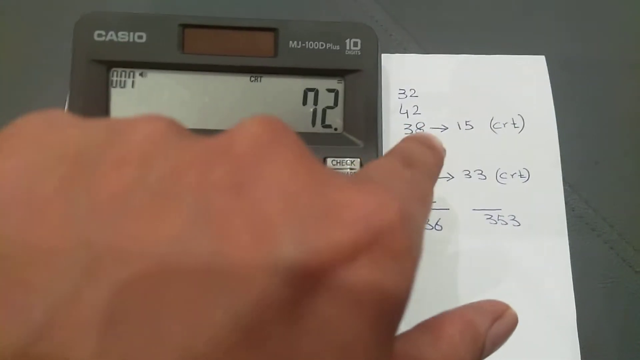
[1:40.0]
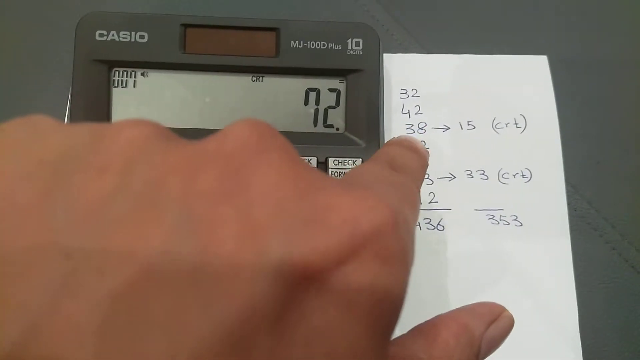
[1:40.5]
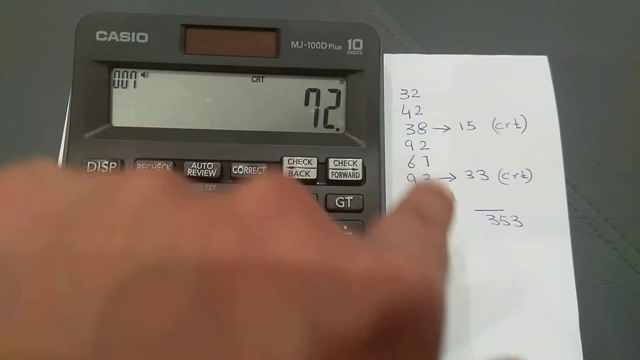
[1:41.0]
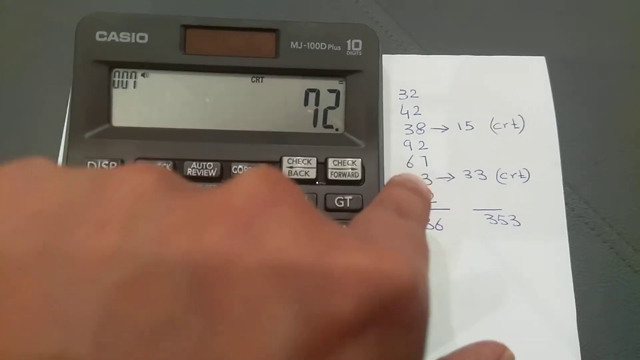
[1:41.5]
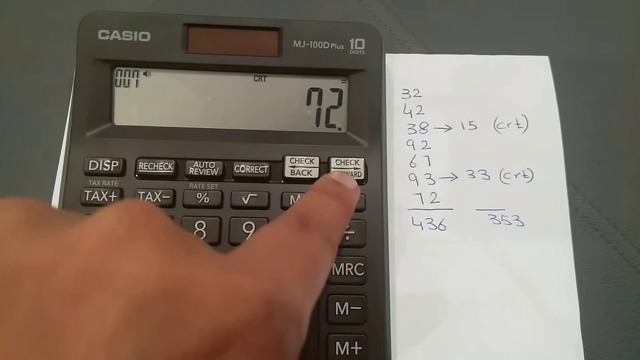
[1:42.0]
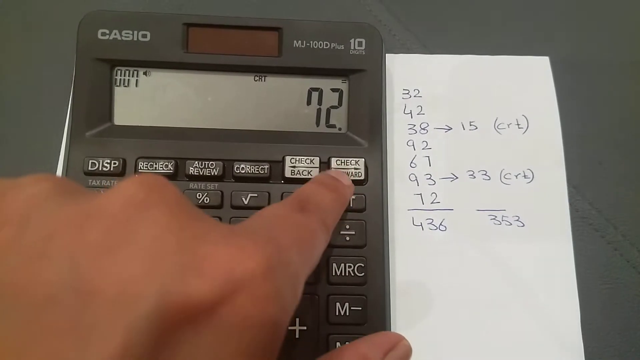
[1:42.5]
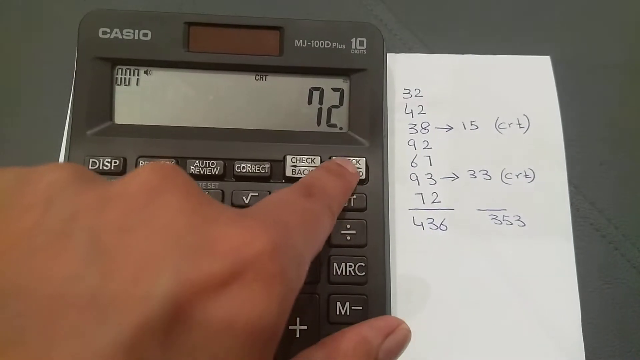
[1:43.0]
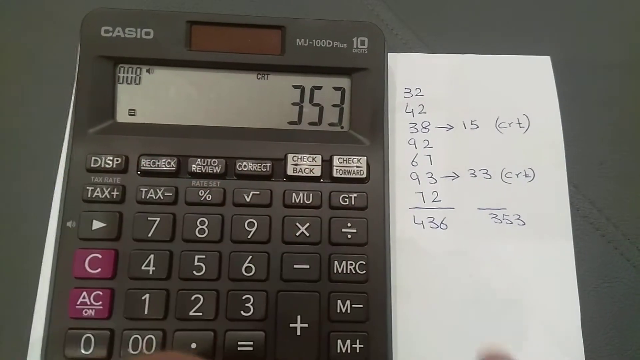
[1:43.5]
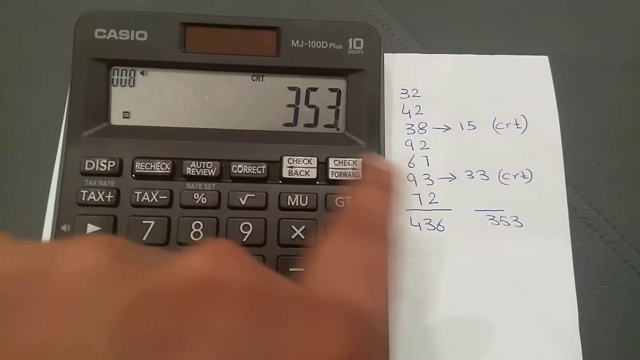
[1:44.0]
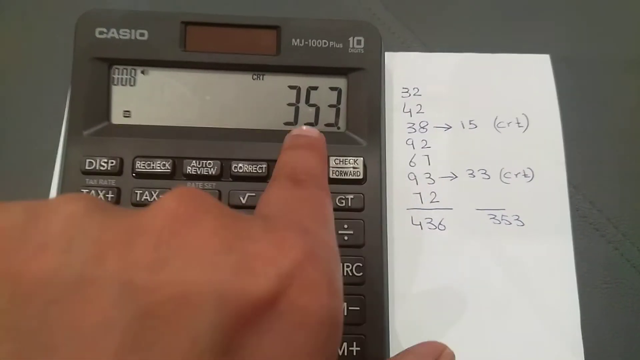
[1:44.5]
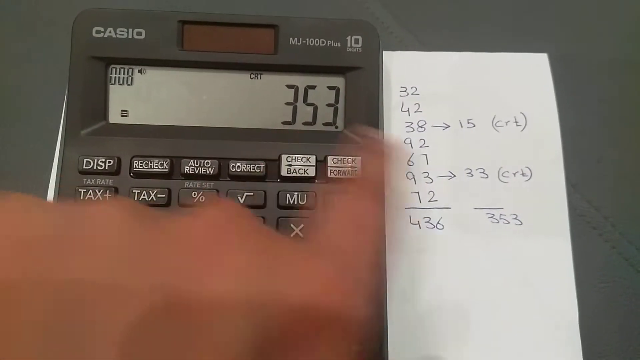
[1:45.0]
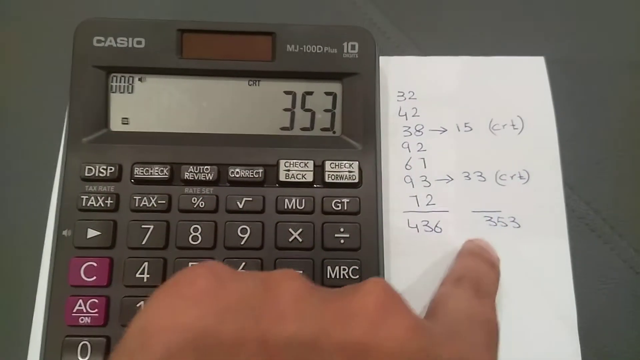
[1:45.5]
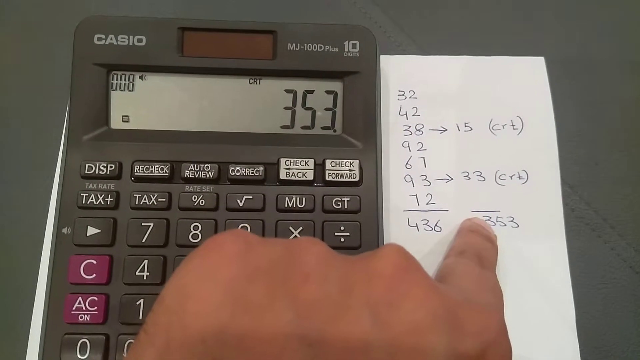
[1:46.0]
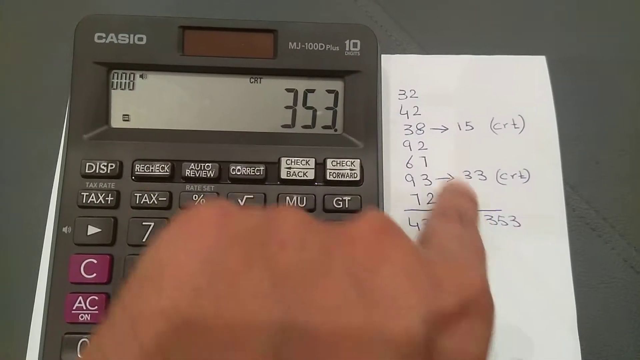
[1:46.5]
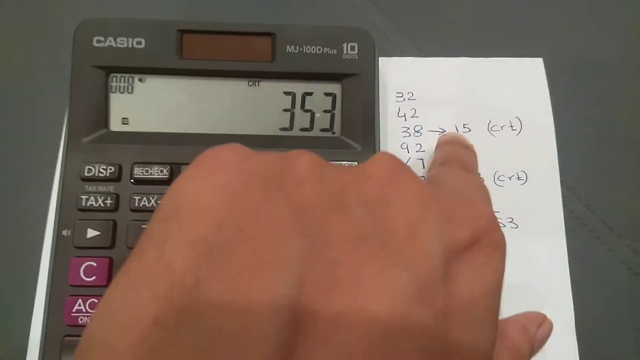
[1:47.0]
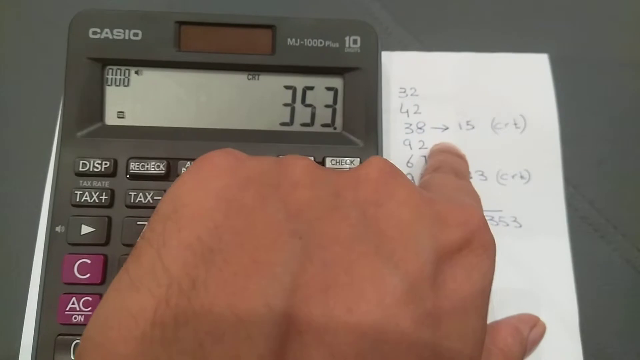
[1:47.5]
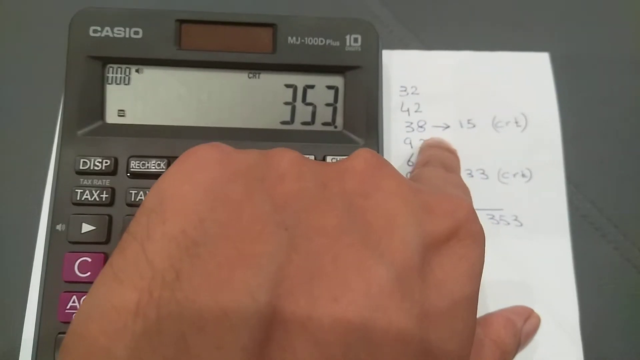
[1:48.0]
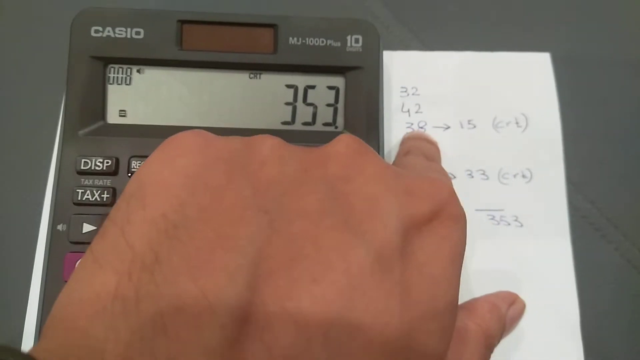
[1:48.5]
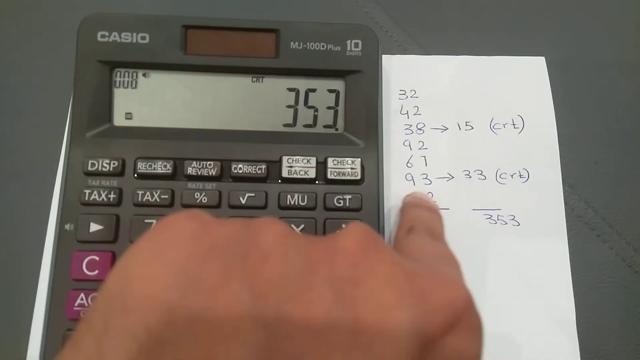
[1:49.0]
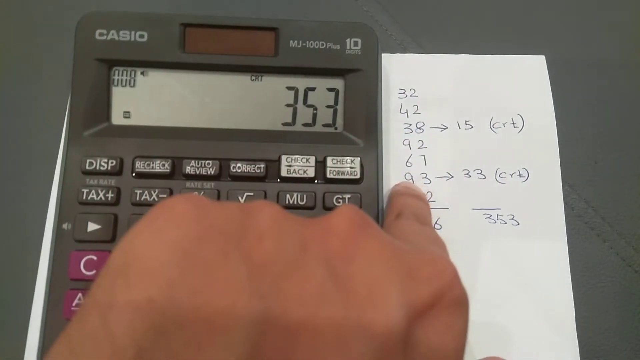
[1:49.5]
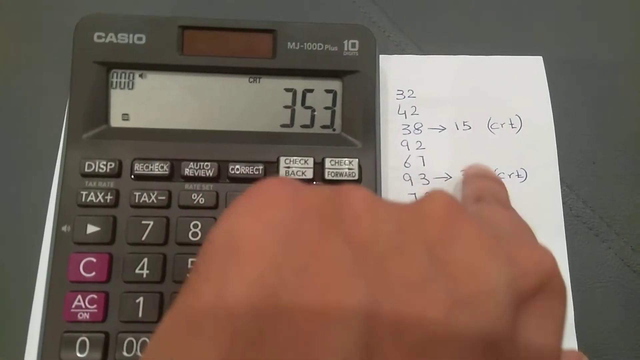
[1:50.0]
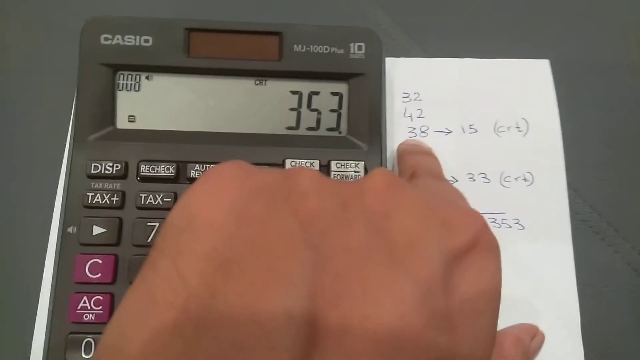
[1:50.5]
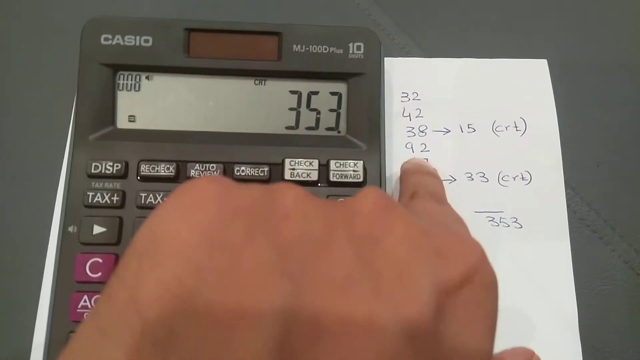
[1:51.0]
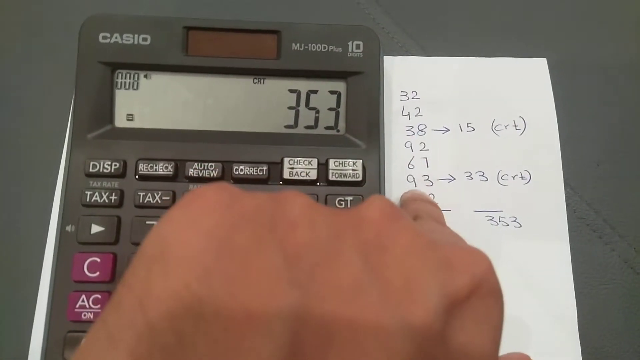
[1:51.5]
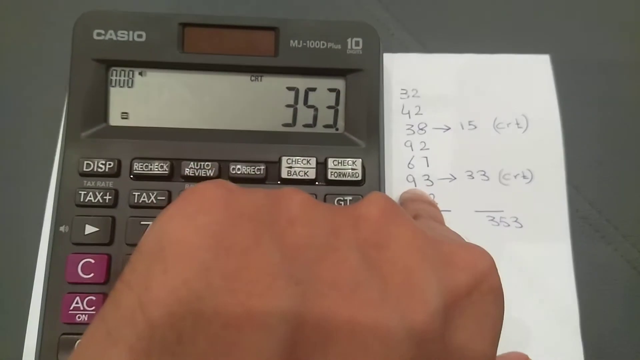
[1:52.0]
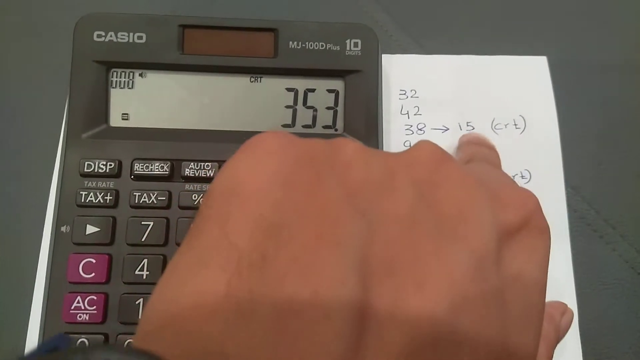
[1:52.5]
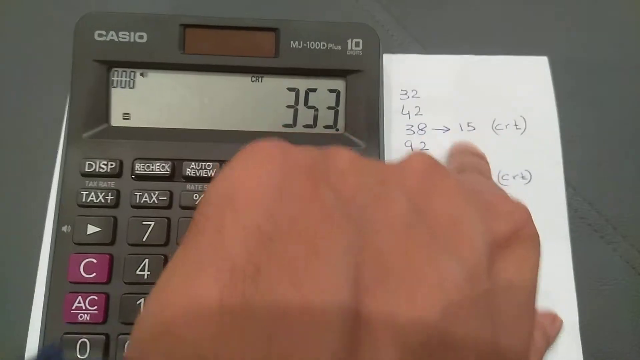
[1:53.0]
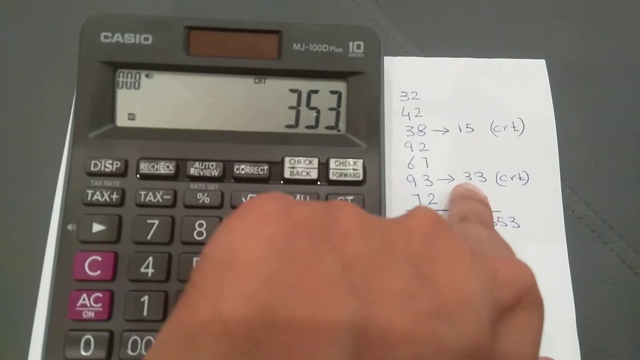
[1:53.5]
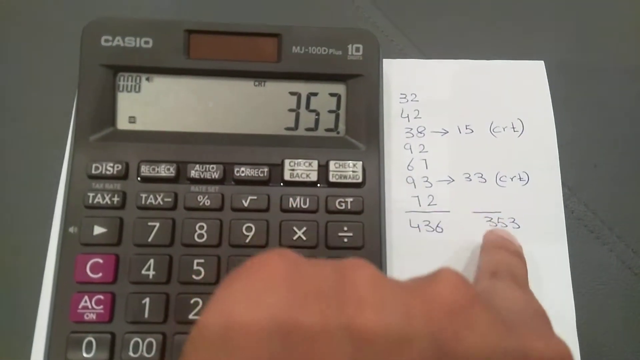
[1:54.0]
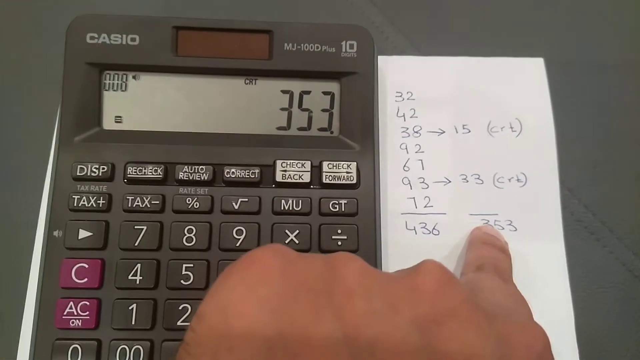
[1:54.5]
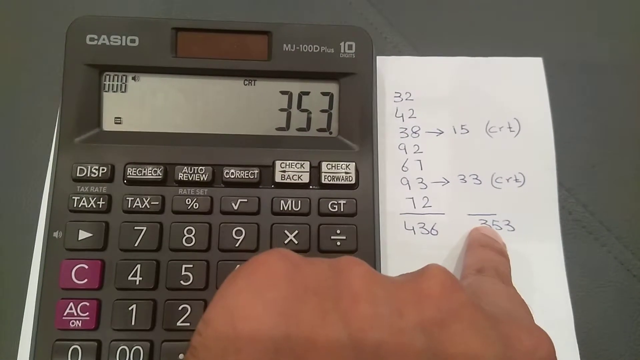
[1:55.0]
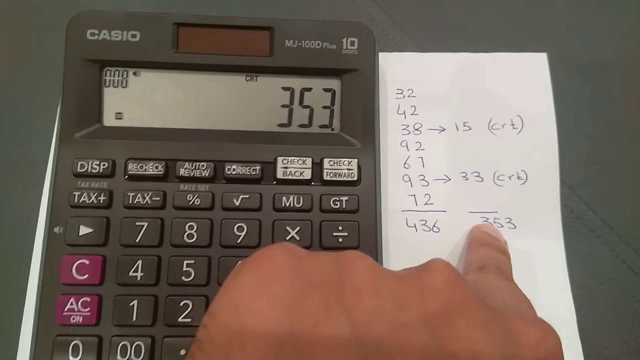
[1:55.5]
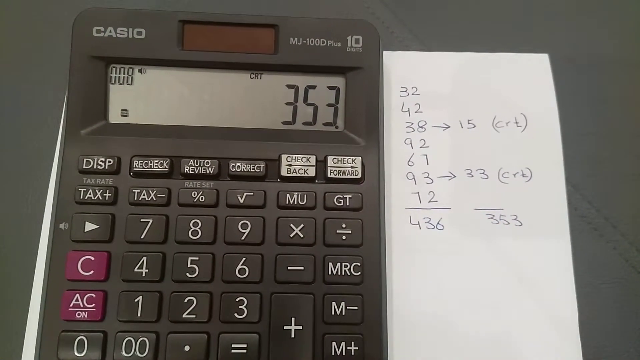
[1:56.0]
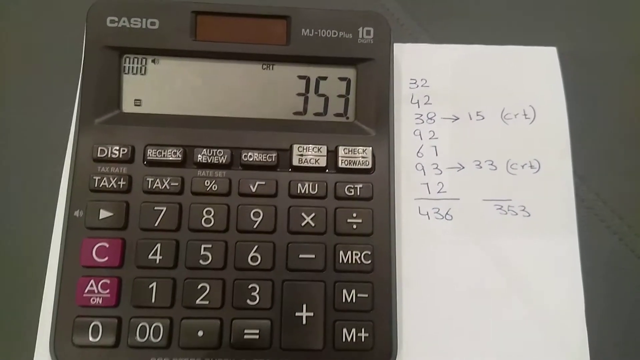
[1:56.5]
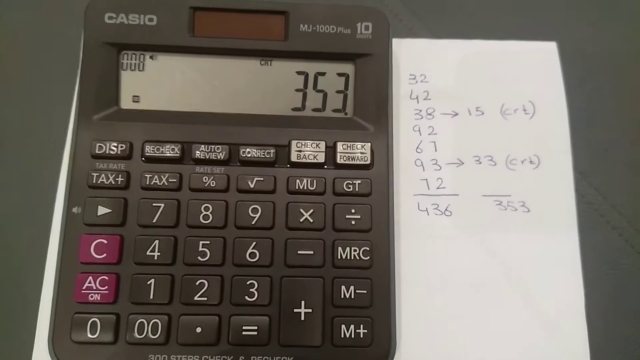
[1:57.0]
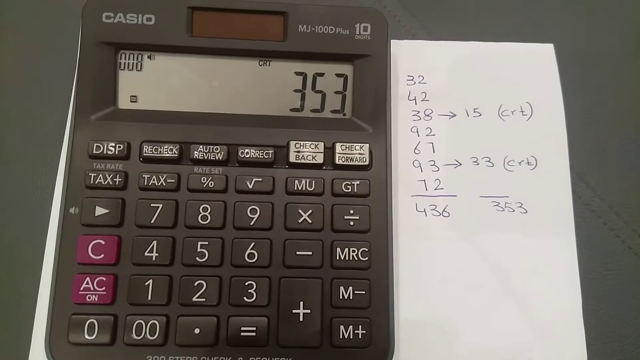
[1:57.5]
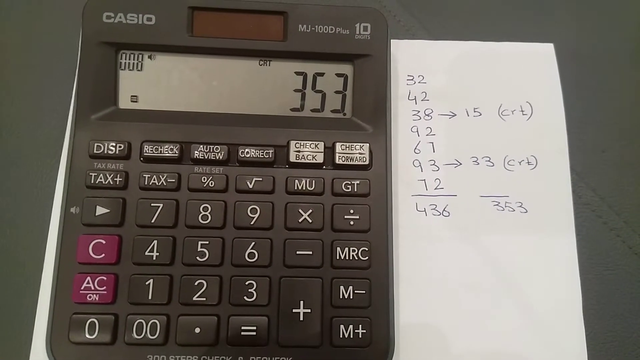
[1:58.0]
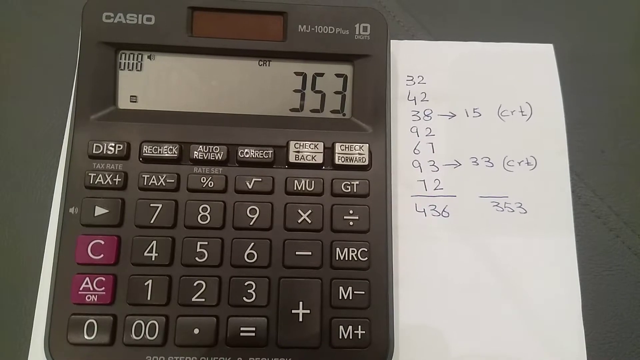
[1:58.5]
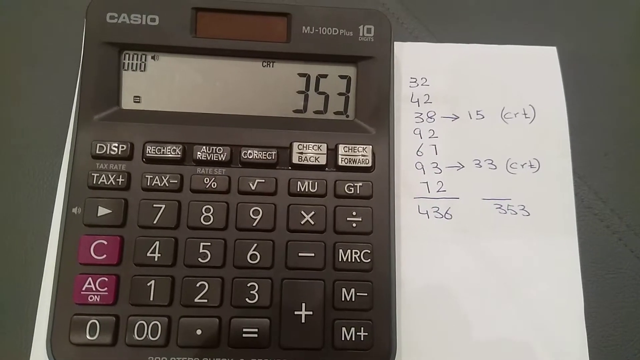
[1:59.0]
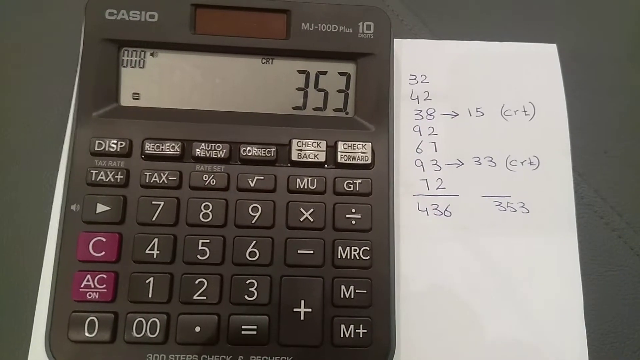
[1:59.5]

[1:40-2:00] The display starts with the number 72 showing. The person points their index finger toward the white piece of paper, first at the number 38 and then at 93. They press the check forward button, and the calculator display shows the total 353. On the paper, to the right of the number 436 at the bottom, there is a line, and underneath it is written the number 353. They point to the 353, then to the 38, then to the 93, then to the number 15 written to the side of the 38, and finally to the number 33 with the arrow, written to the right of the 93.